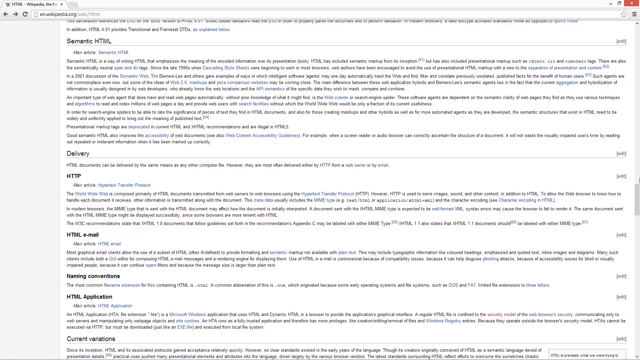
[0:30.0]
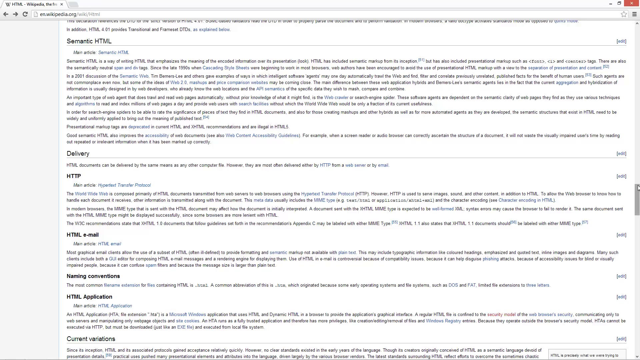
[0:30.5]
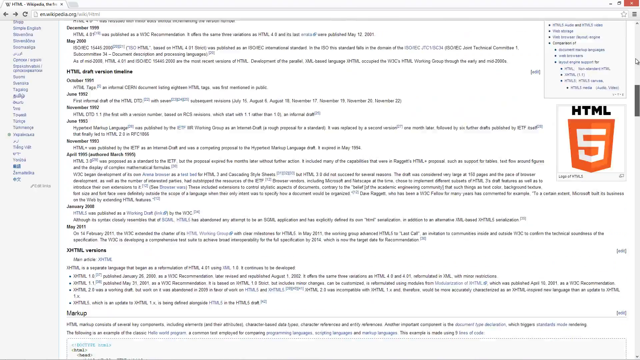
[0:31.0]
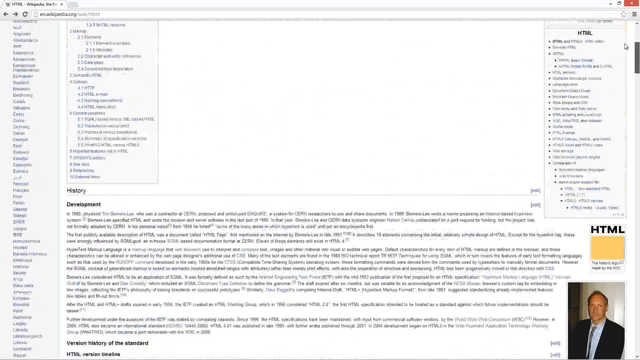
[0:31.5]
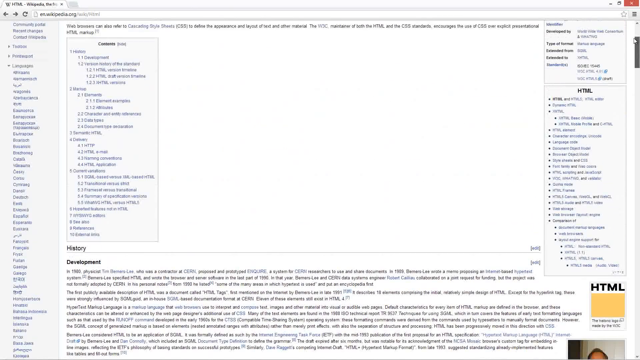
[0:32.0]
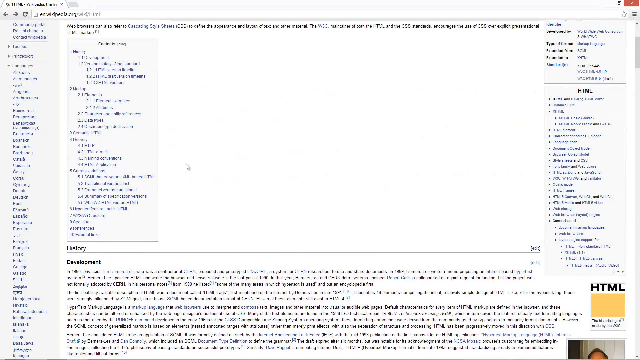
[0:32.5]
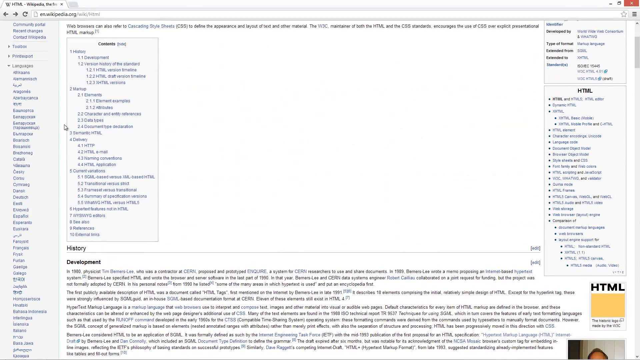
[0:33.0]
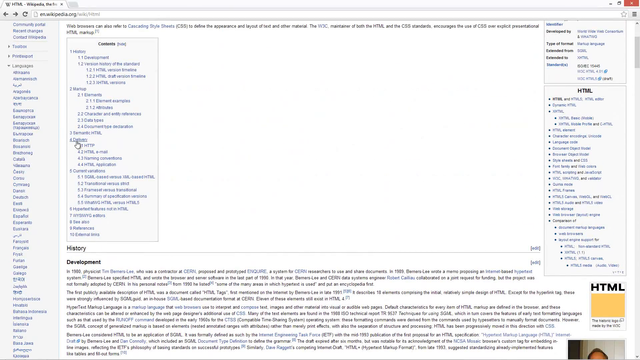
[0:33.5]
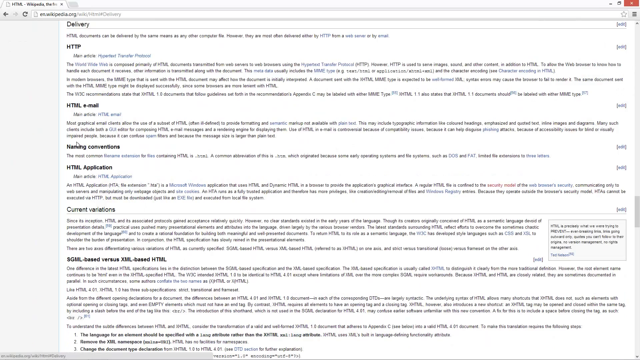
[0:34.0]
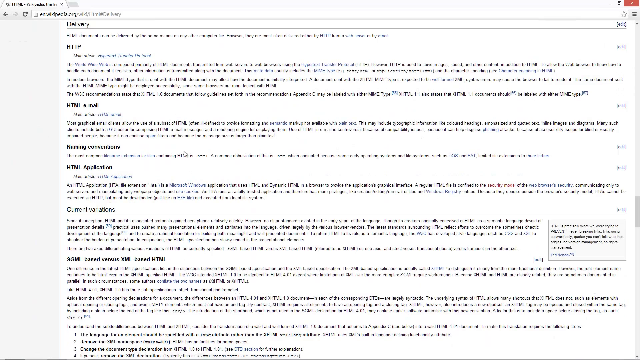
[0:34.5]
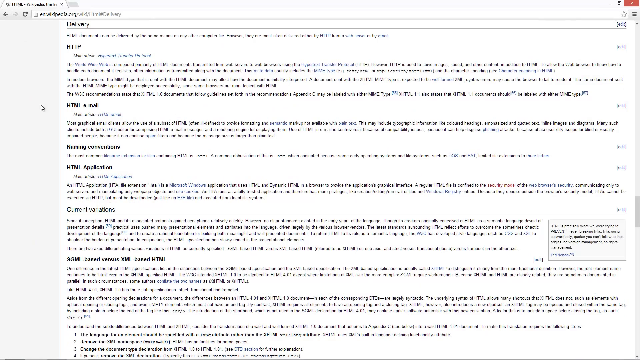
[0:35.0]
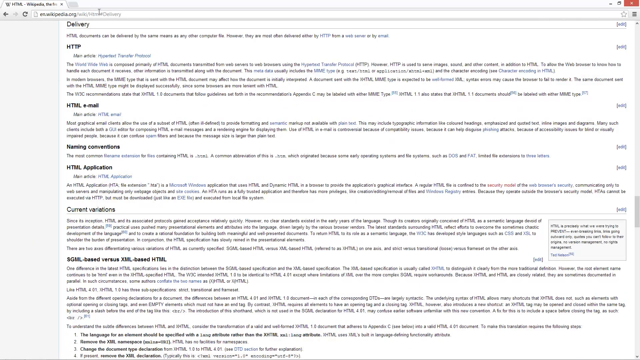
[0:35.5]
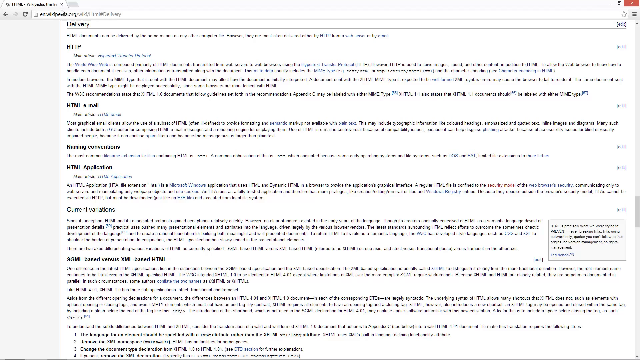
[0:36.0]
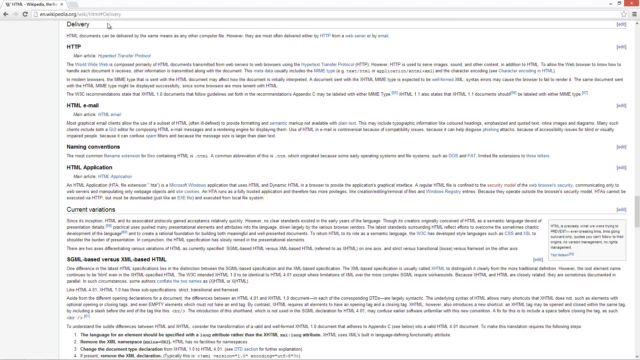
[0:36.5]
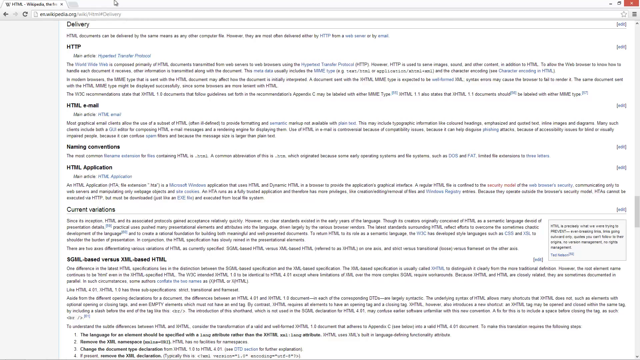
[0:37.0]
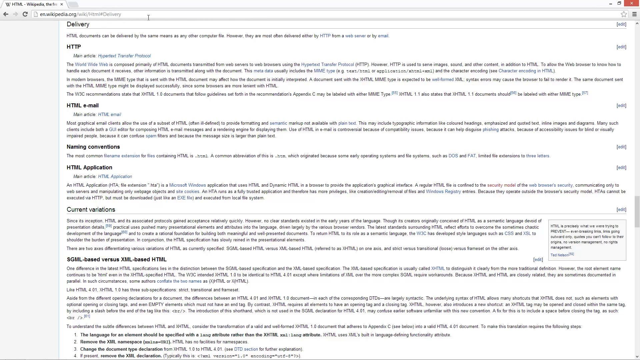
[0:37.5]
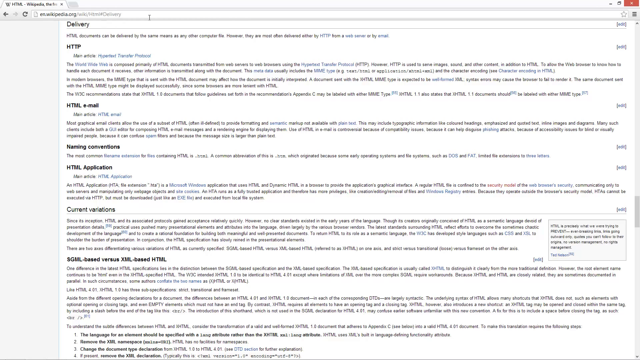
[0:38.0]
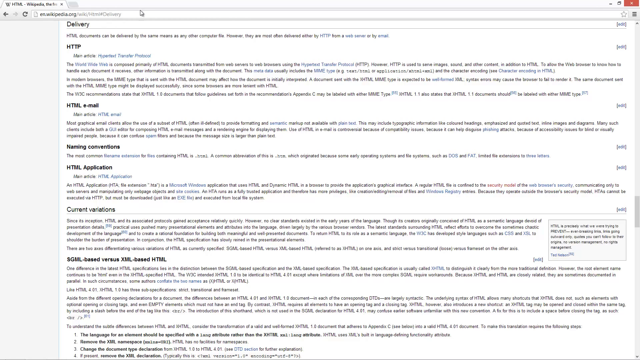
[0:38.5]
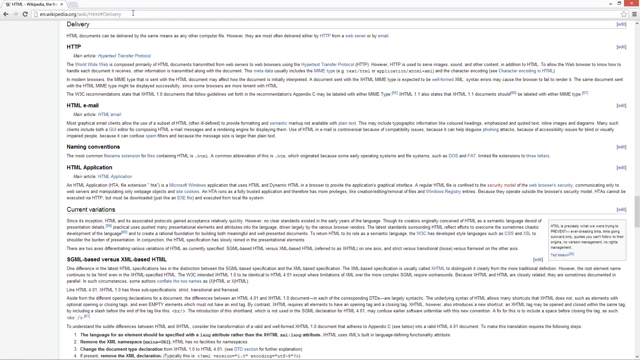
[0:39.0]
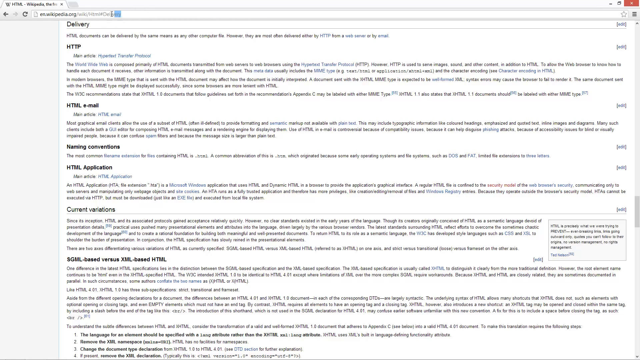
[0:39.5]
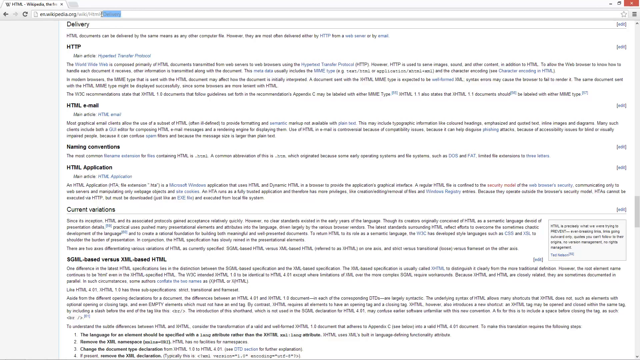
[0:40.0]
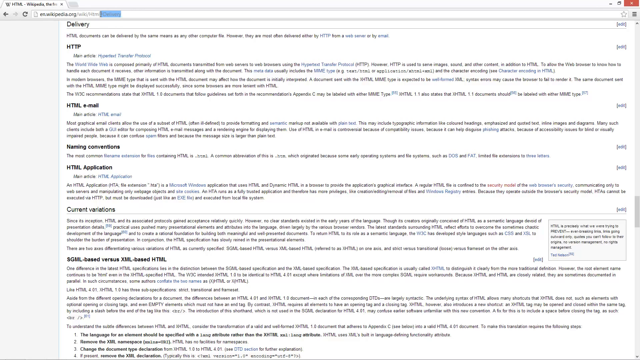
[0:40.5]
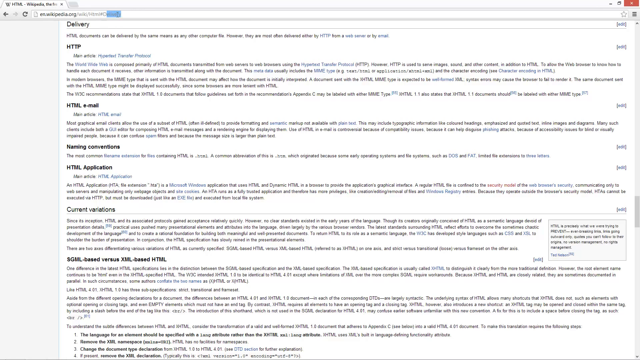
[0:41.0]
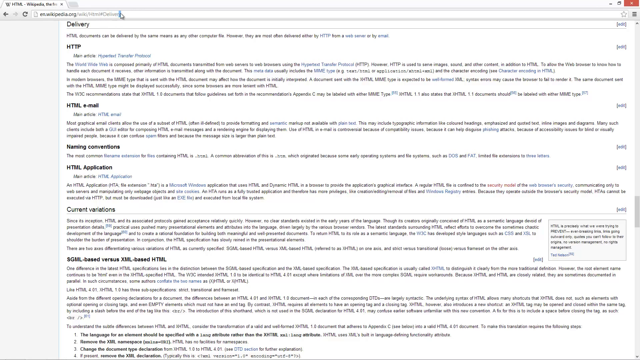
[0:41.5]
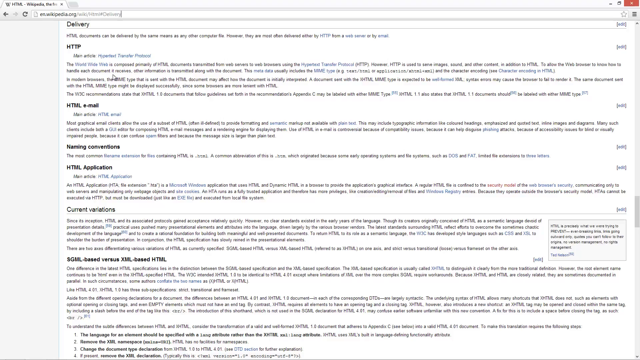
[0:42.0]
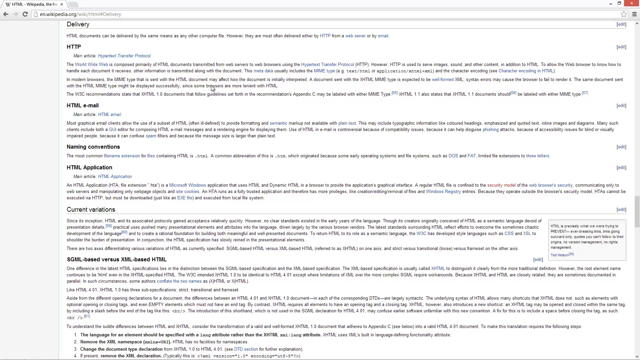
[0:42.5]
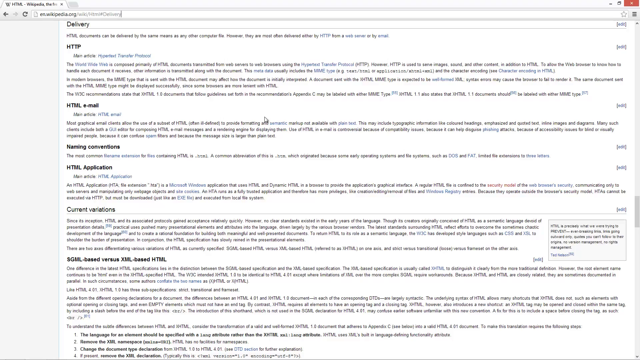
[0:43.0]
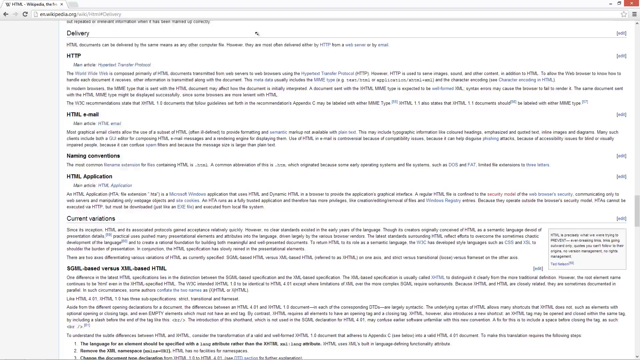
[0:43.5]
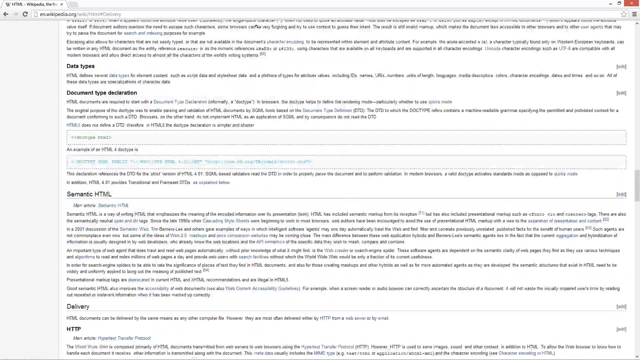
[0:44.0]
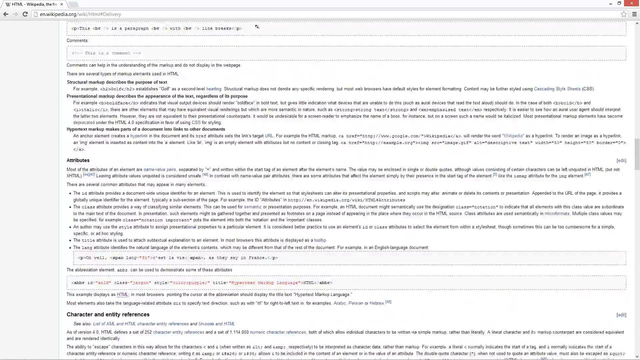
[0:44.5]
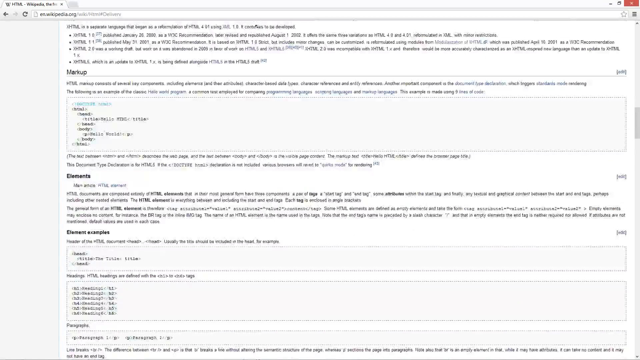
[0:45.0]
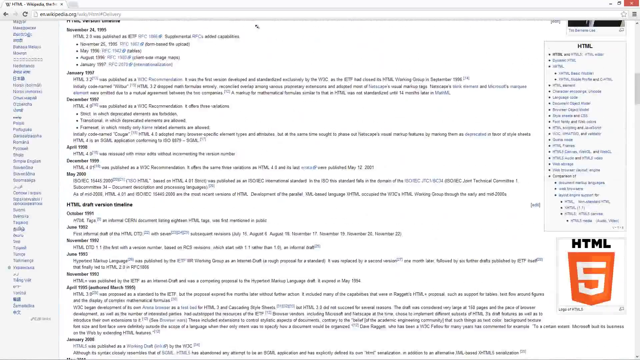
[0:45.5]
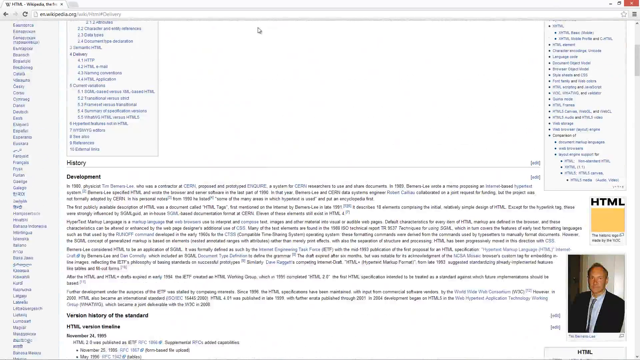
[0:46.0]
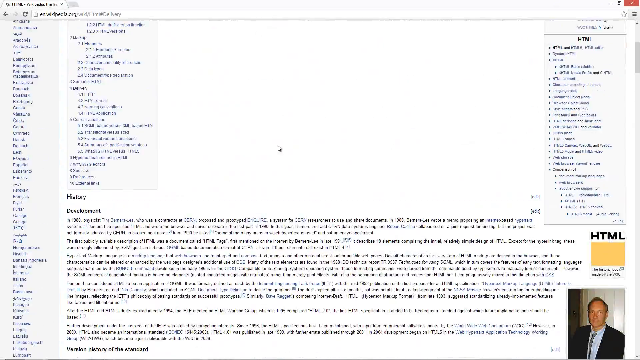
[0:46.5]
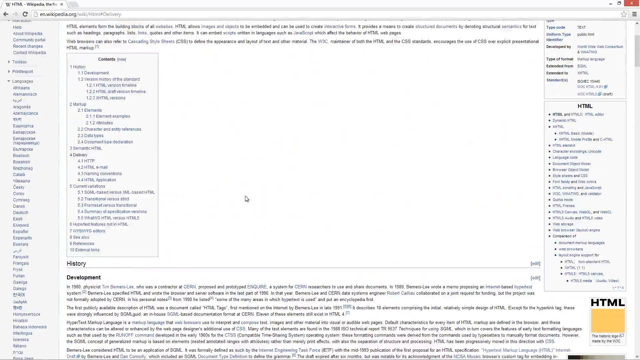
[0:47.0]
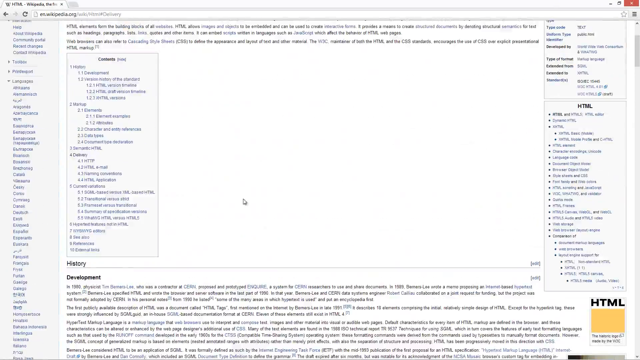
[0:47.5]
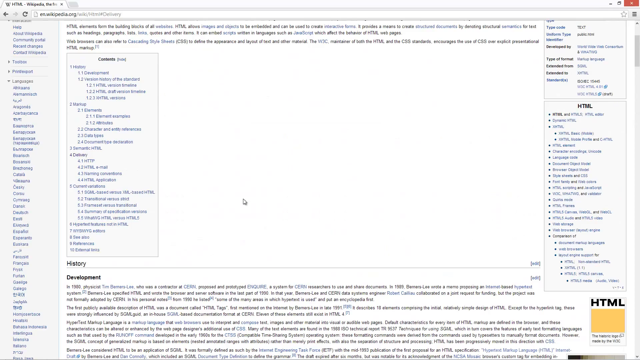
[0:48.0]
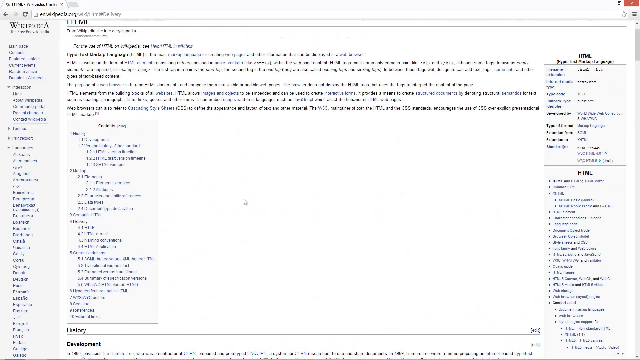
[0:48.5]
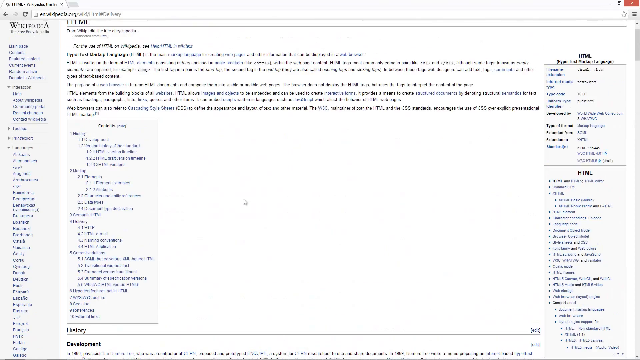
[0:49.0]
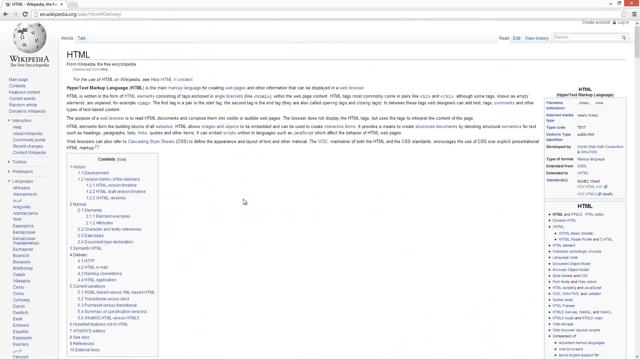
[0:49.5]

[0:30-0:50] The Wikipedia page remains blurry. A rectangular box appears in the upper right corner, possibly for exiting. There seems to be one tab open up top. A blurry word looks similar to "systematic," "somatic" or "semantic." Down the right side, "HTML" appears in uppercase letters, looking like a headline for one of the sections of the HTML article, and something that looks like "http" is visible. The mouse moves just above, as if about to type something else into the browser, but then the page is scrolled back up.